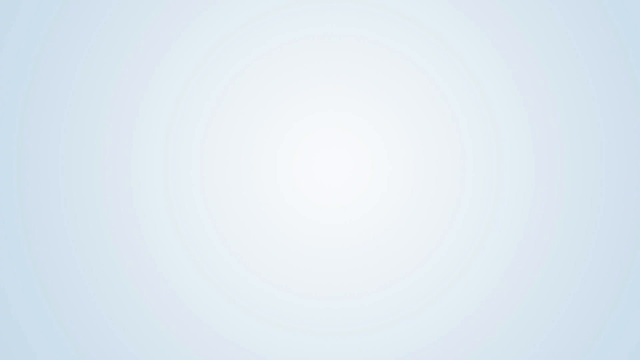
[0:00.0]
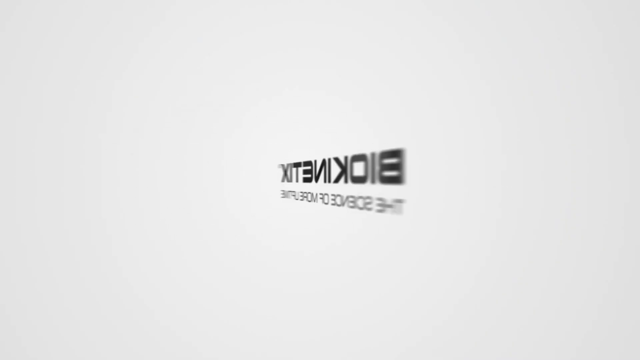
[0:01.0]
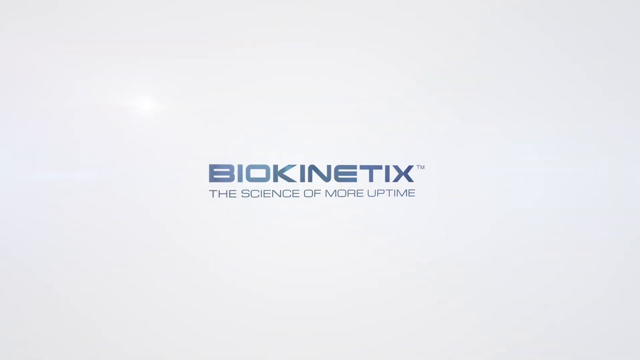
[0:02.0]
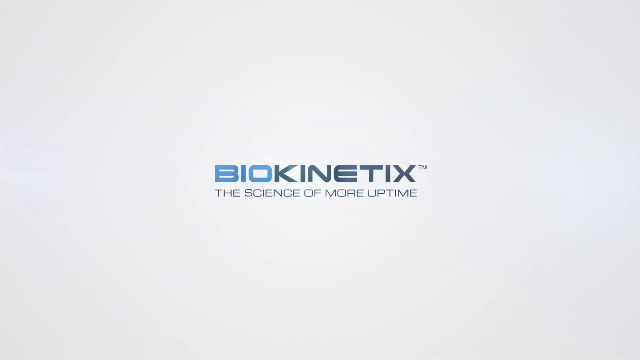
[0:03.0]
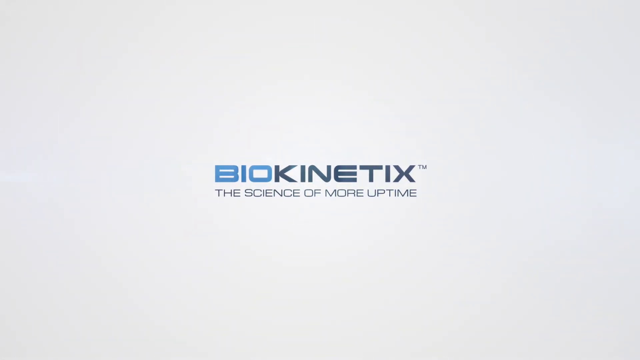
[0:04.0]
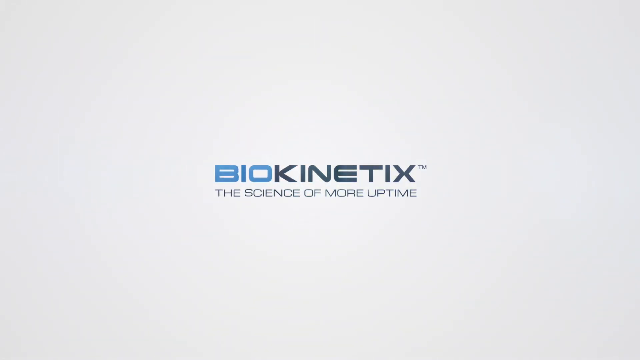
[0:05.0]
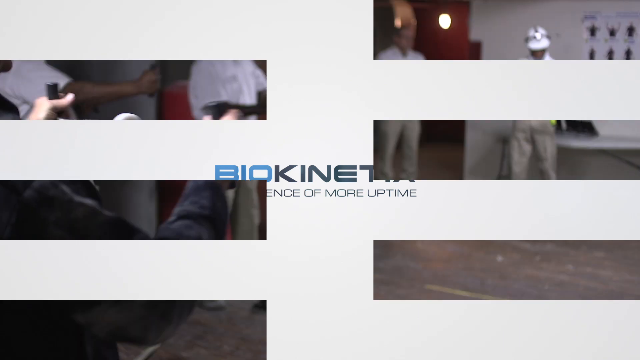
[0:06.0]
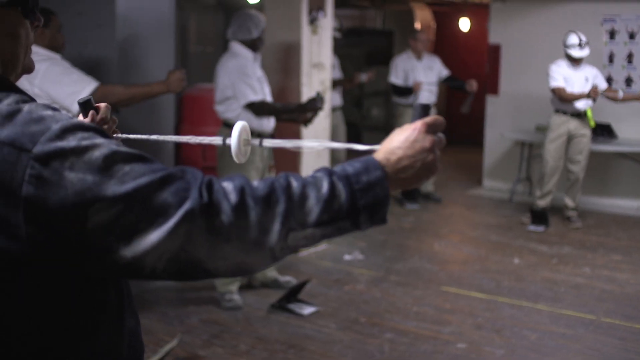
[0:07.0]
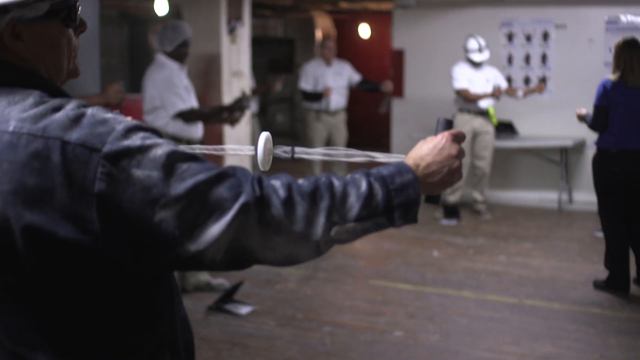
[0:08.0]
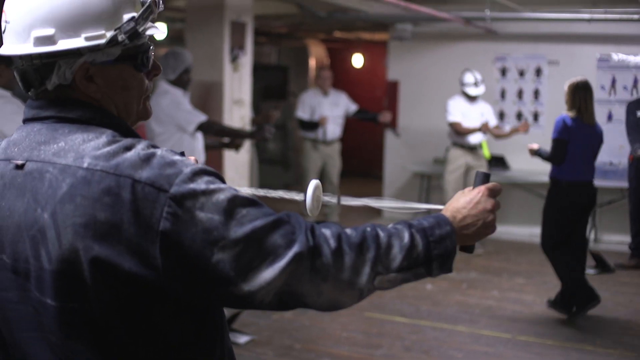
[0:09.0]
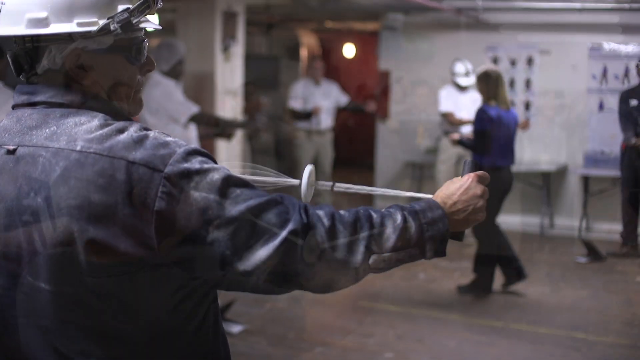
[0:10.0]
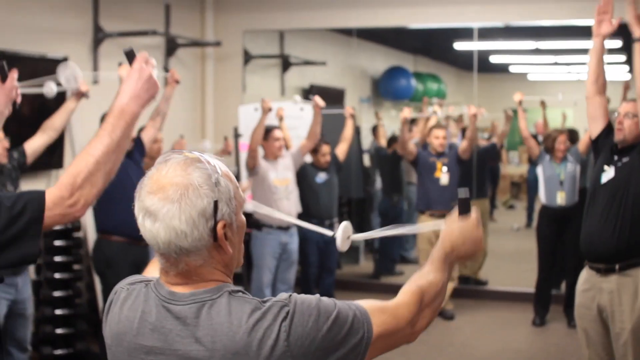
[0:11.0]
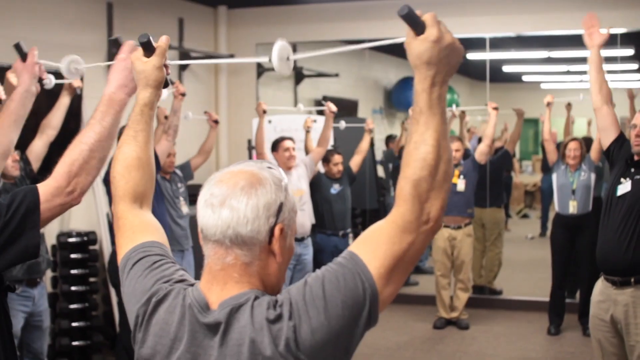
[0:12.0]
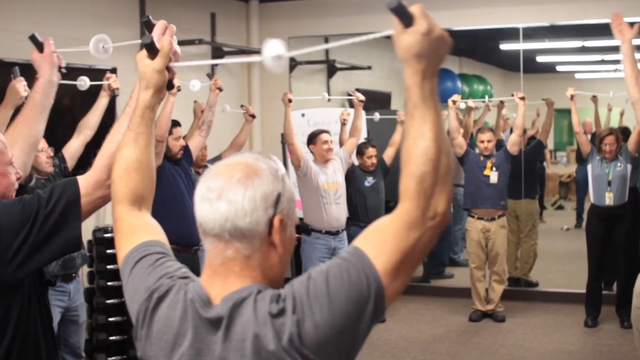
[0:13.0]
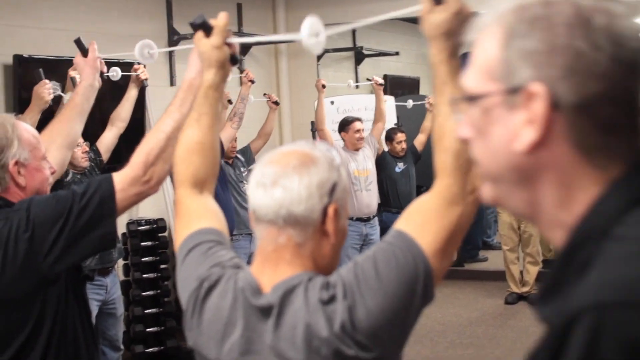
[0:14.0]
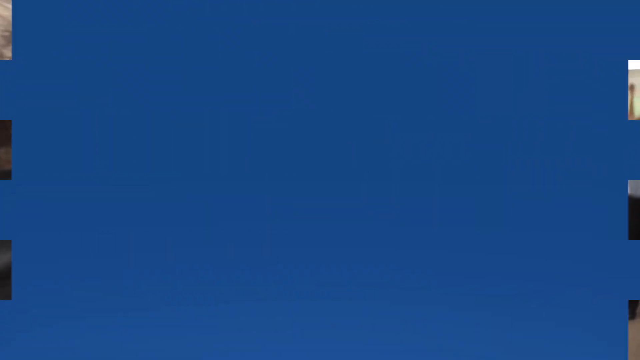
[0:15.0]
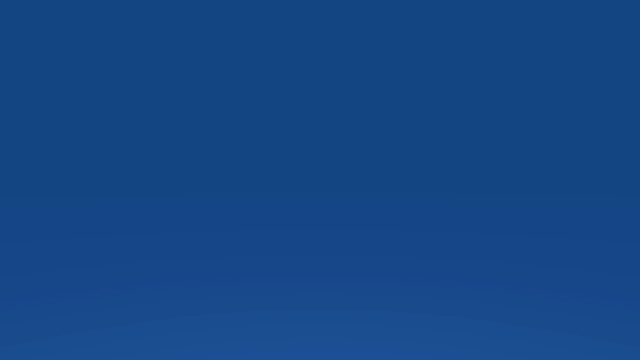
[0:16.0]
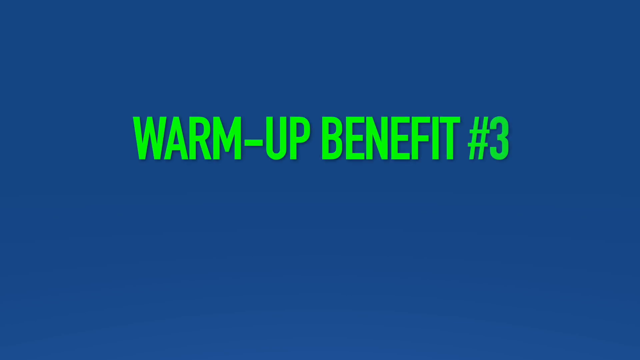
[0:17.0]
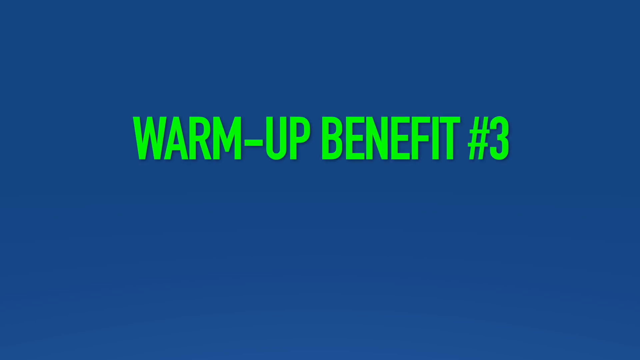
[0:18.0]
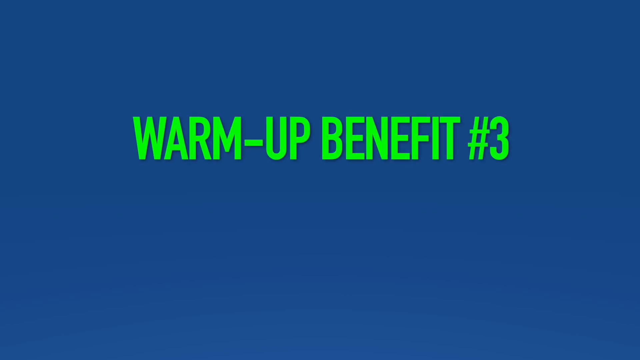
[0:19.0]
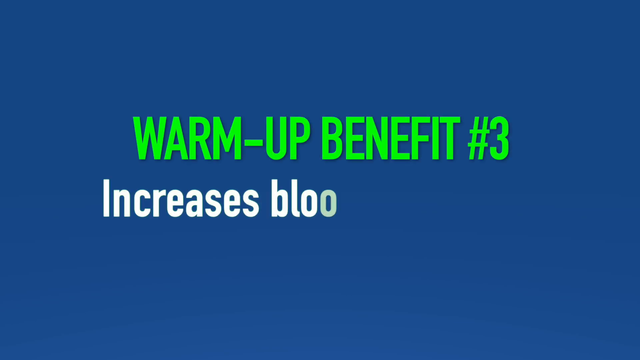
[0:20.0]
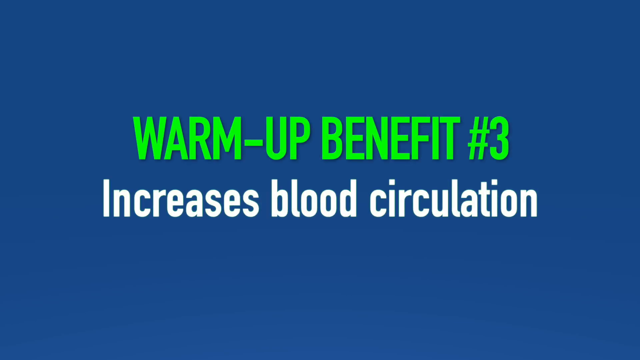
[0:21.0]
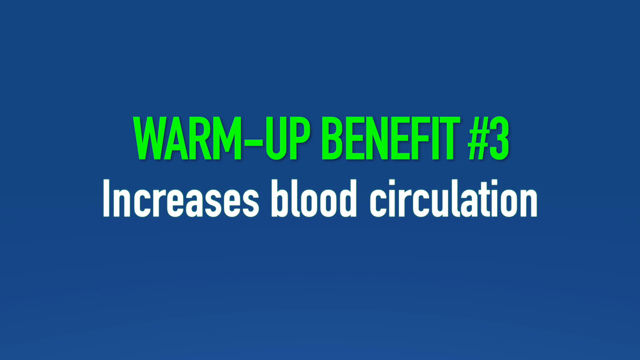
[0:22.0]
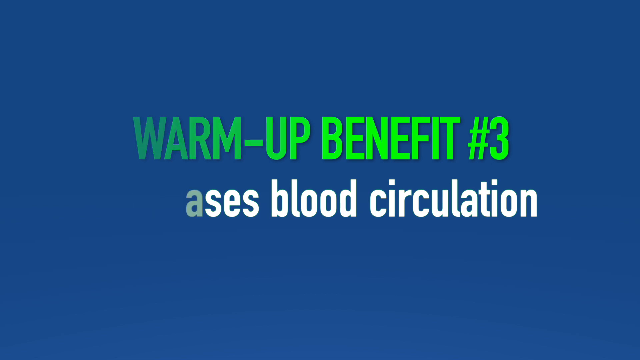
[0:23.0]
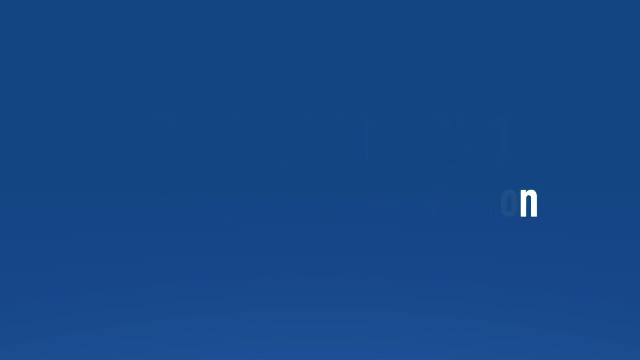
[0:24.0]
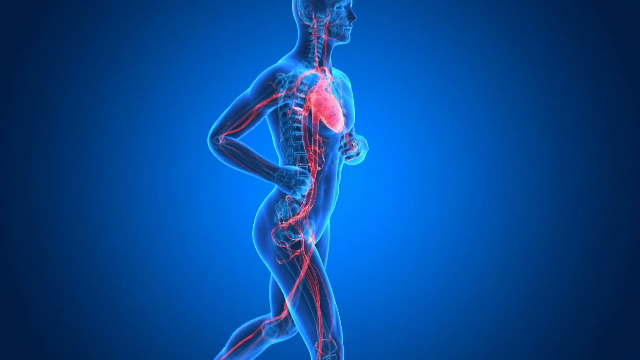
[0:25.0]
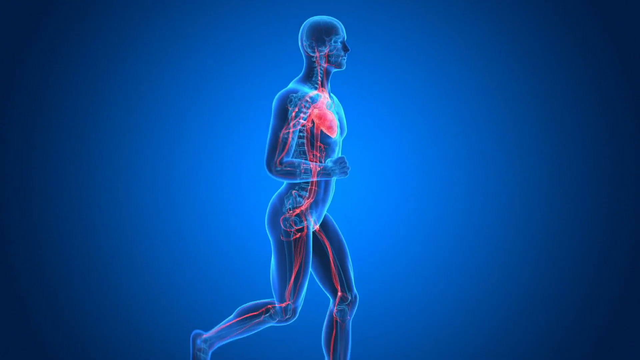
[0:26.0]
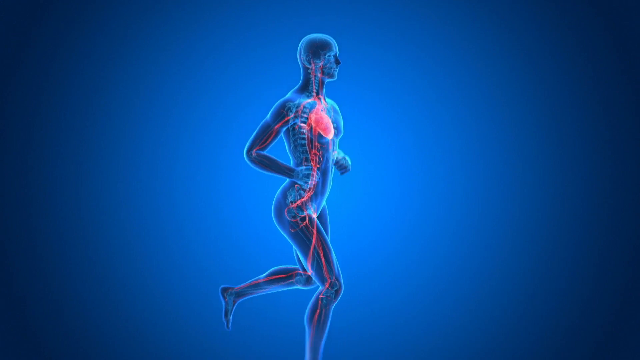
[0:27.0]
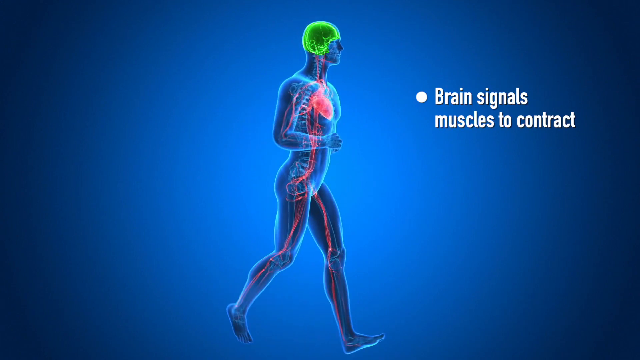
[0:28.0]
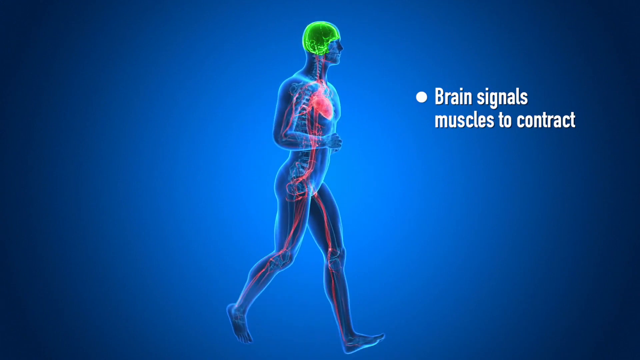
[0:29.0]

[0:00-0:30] The video opens with the title "Biokinetics" written in all capital letters, with "bio" in light blue and "kinetics" in dark blue. Below it, in a smaller font and also in capital letters, is "the science of more uptime". The video then moves to a room filled with older men doing some sort of exercise, pulling on a rope with their right and left hands. The rope in each hand is connected to some sort of handle, and in the middle is a round circular disc that they pull back and forth, almost like a yo-yo. The rope seems to have some elasticity. The video then cuts to a more modern-day picture of older people in a gymnasium pulling on the rope back and forth, while a person in the middle seems to be leading the group.